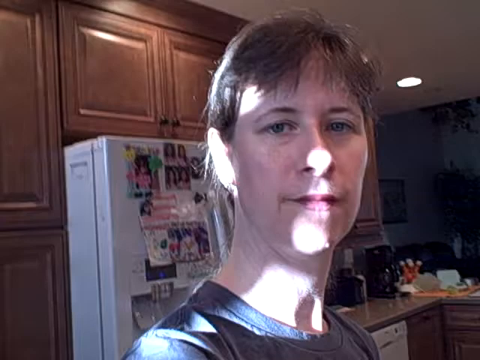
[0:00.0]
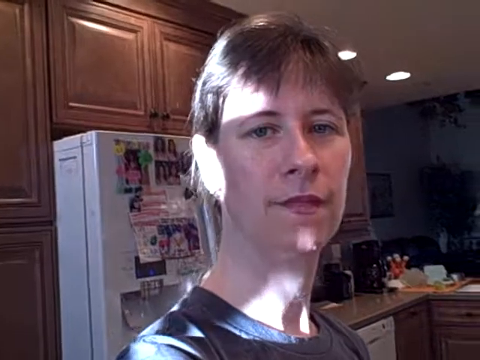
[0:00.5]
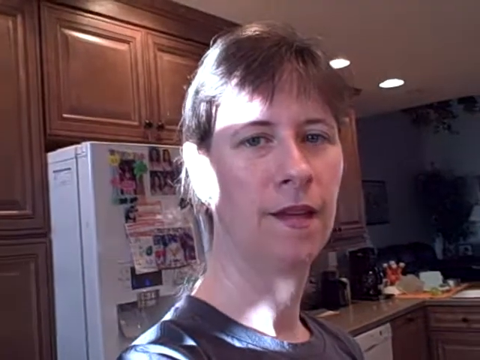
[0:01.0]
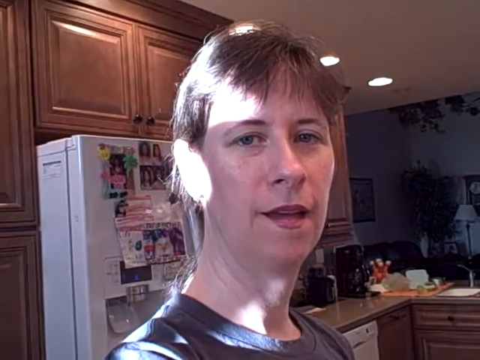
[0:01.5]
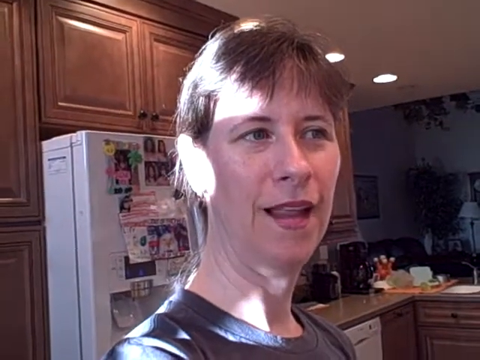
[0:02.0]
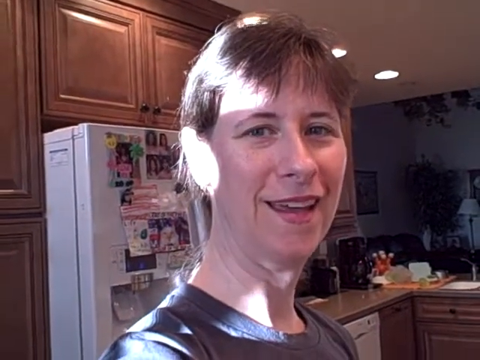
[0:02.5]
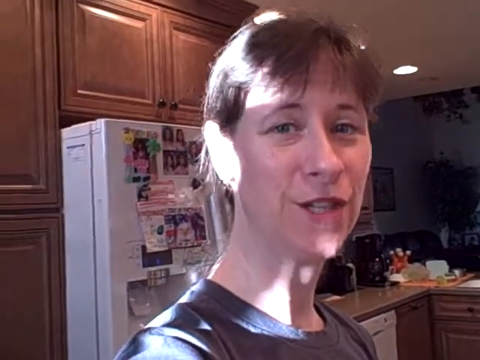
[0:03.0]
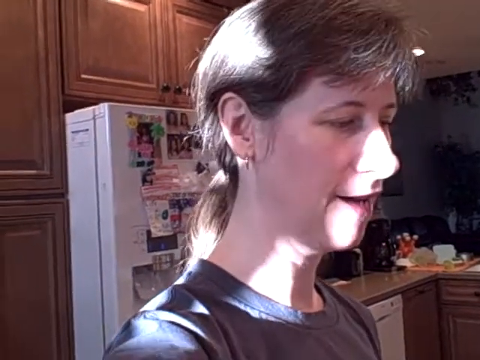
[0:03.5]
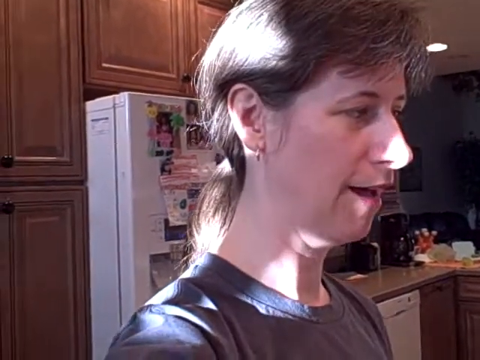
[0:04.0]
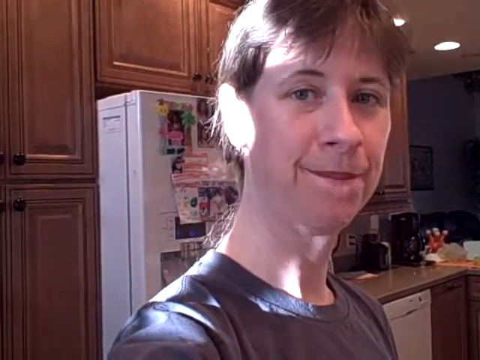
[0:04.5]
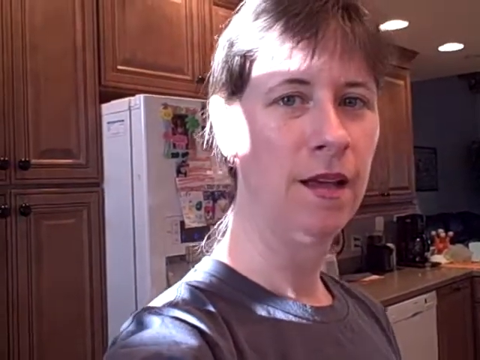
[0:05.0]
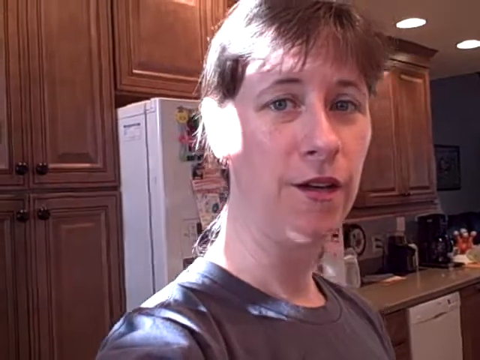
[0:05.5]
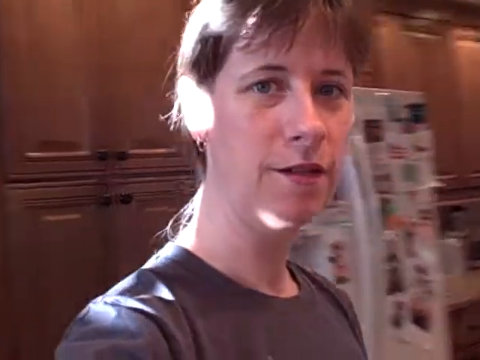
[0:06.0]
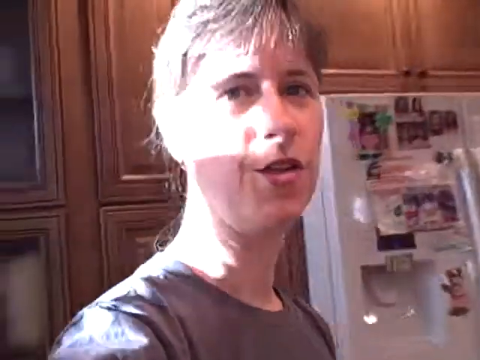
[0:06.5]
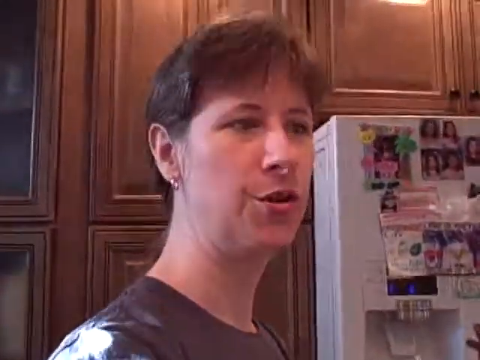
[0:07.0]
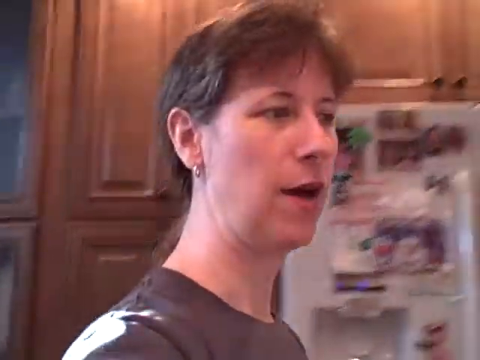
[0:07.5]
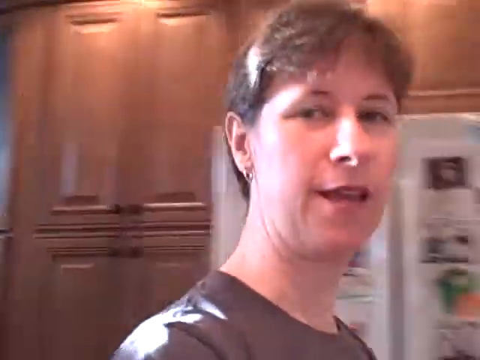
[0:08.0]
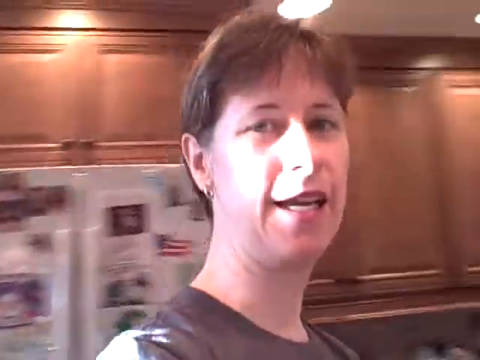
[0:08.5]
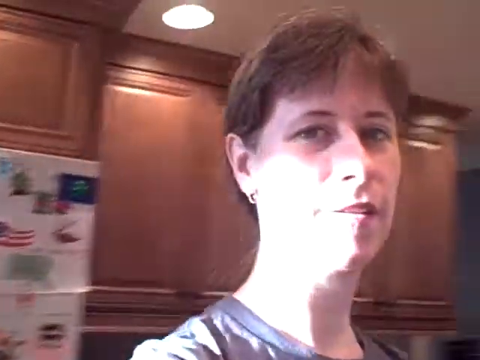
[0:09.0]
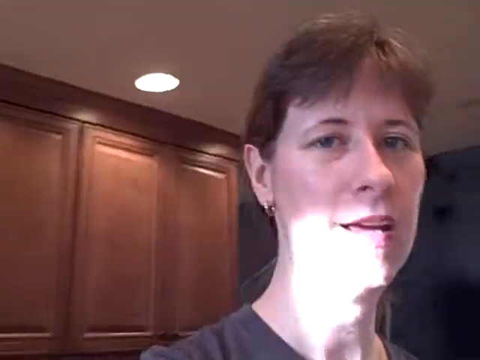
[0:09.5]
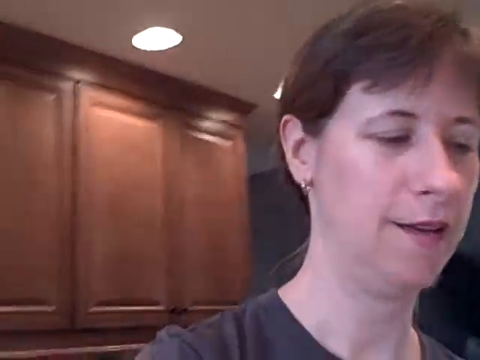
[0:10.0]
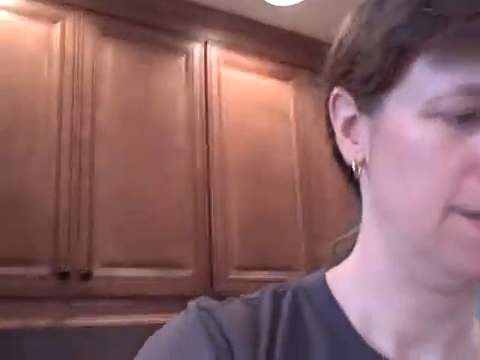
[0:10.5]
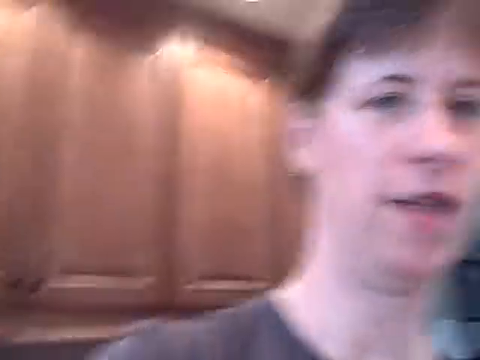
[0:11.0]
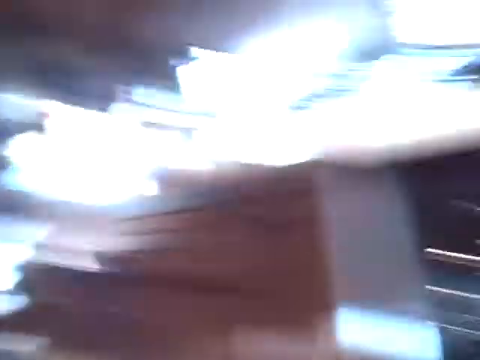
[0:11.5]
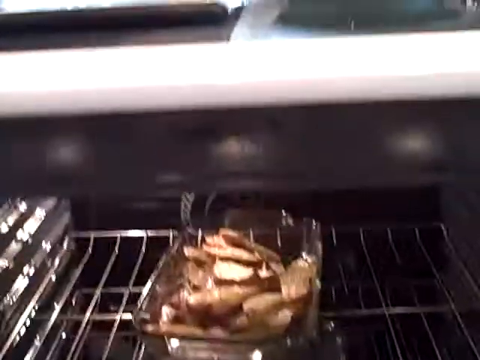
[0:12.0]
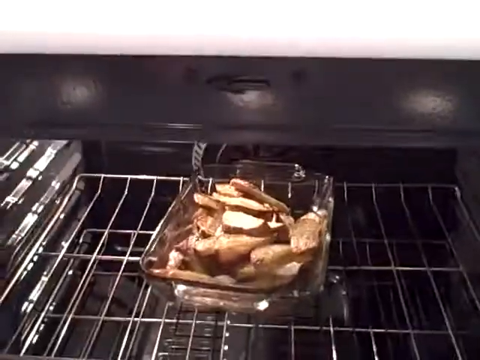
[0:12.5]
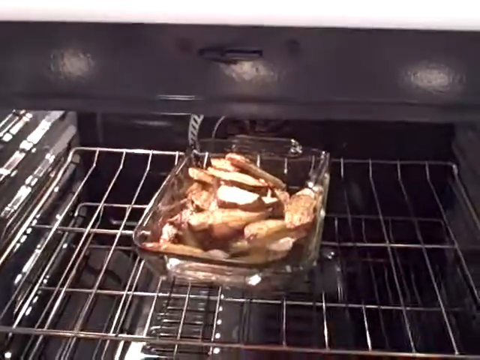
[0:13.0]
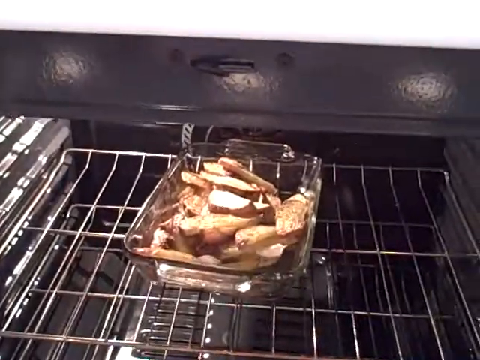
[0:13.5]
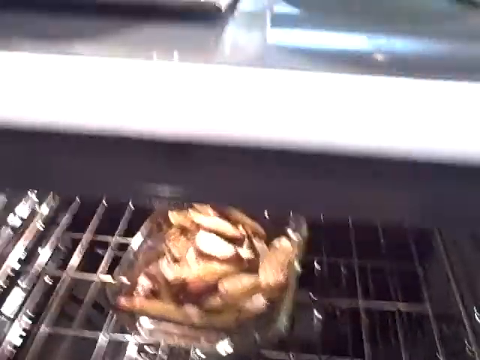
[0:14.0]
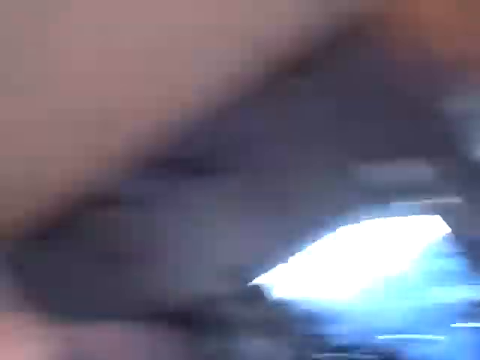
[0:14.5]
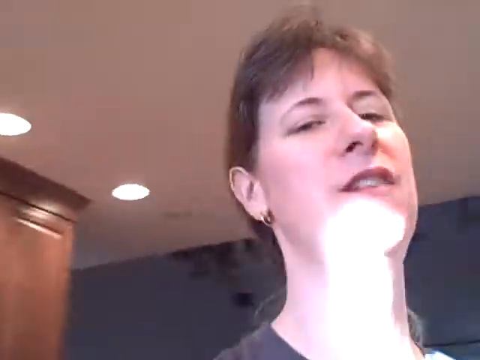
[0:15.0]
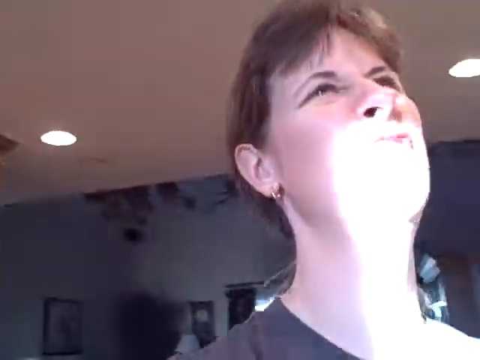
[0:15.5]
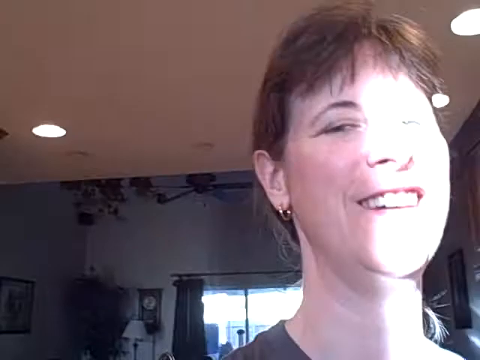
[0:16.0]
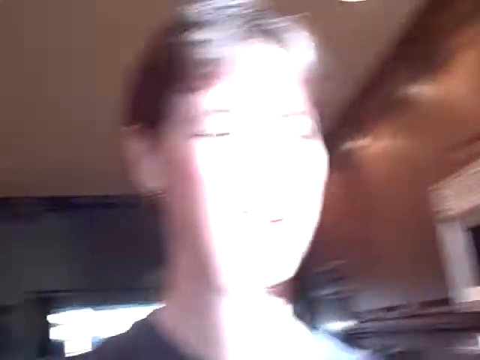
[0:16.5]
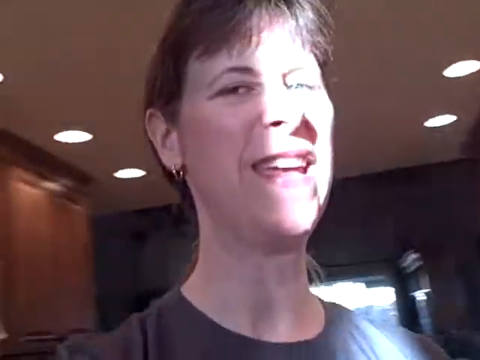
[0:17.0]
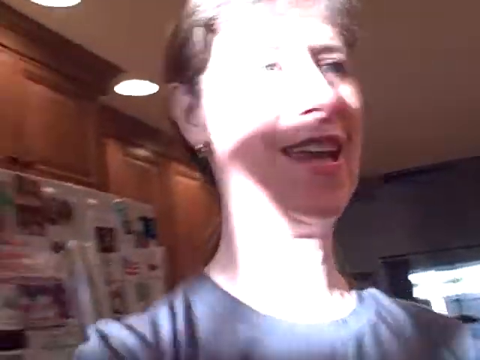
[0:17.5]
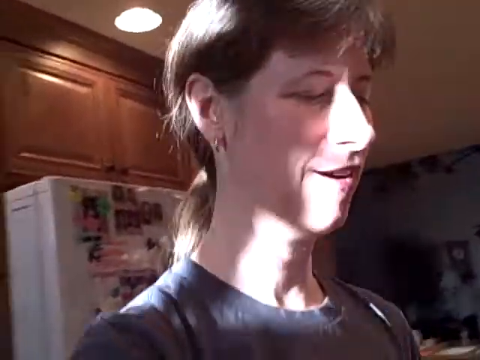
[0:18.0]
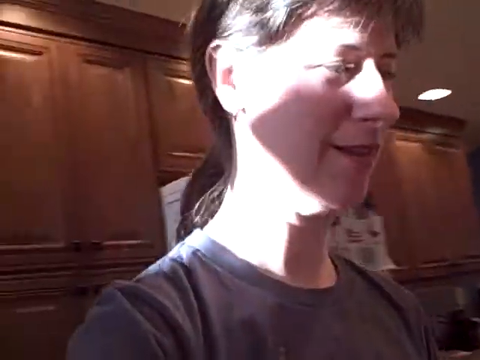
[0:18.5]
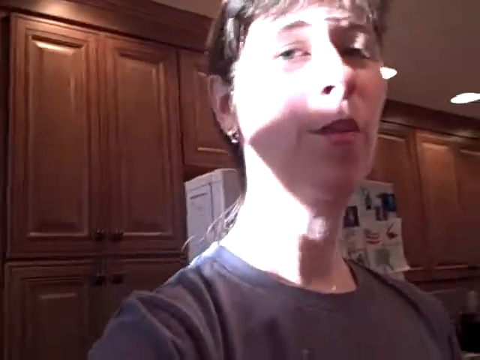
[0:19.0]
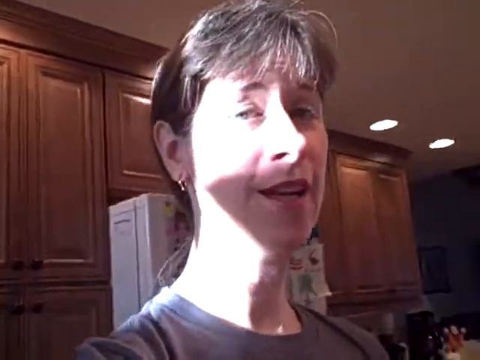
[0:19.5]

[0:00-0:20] A woman looks directly at the camera in what appears to be her kitchen. Behind her is a white fridge covered with loads of drawings and pictures, with wooden cabinets around it, running from the left-hand side over to the right-hand side of her head. She is sort of in the middle of the frame, and sunlight reflects on her, so it appears to be daytime. She wears a black top, her hair is tied up in a ponytail with a fringe, and she has blue eyes. On the right-hand side are kitchen appliances such as a coffee maker and a blender, and the space appears to lead into the living room, where a lampshade and a picture frame are visible. She appears to be talking into the camera and walks with it, holding it in one hand so it follows her. She flips the camera to show the inside of her oven, which holds what looks like potato wedges she has made, then quickly flips back to herself, the light still reflecting on her face.